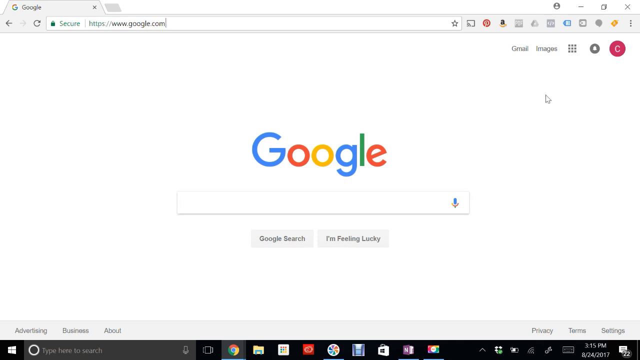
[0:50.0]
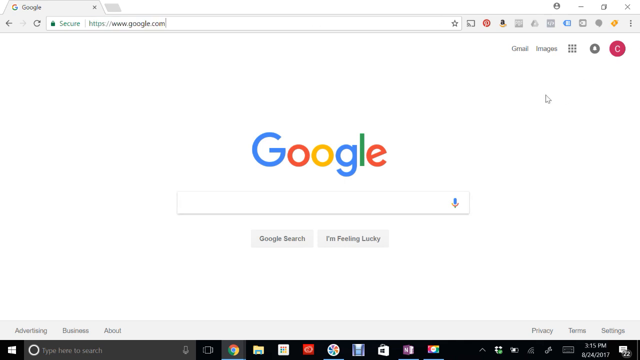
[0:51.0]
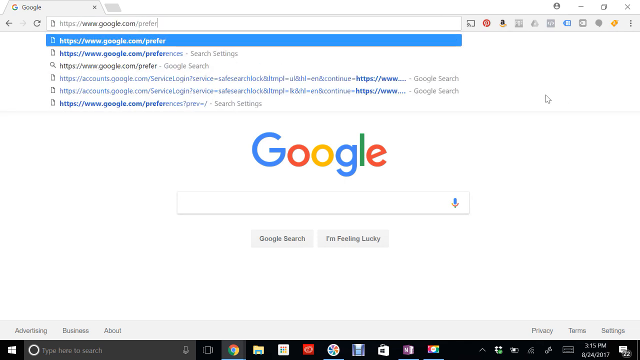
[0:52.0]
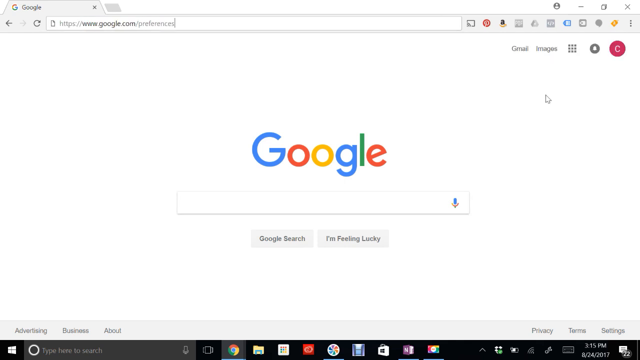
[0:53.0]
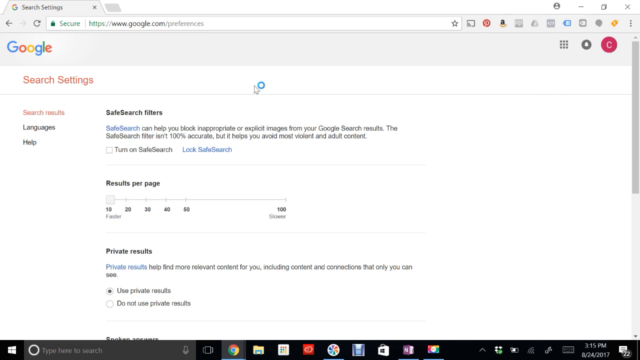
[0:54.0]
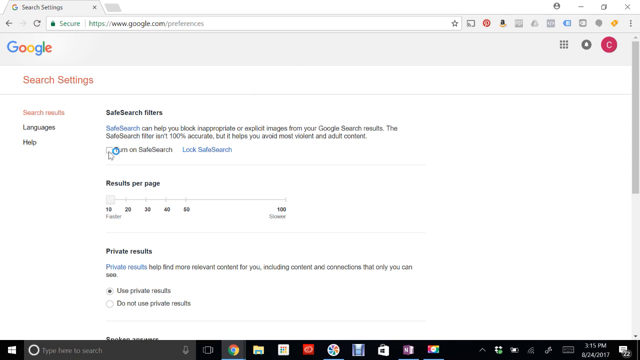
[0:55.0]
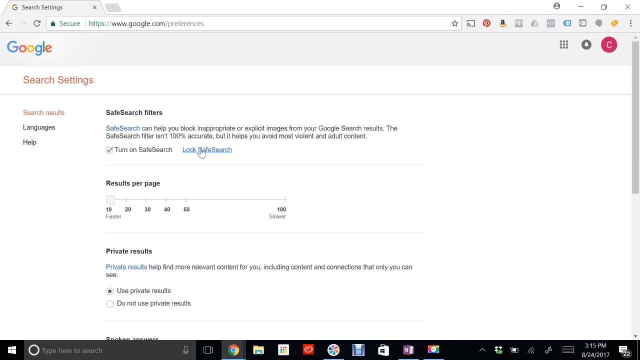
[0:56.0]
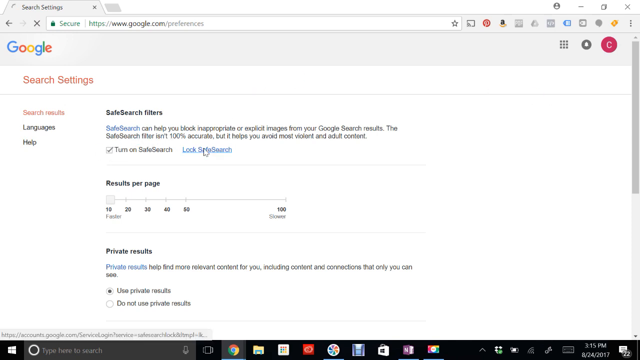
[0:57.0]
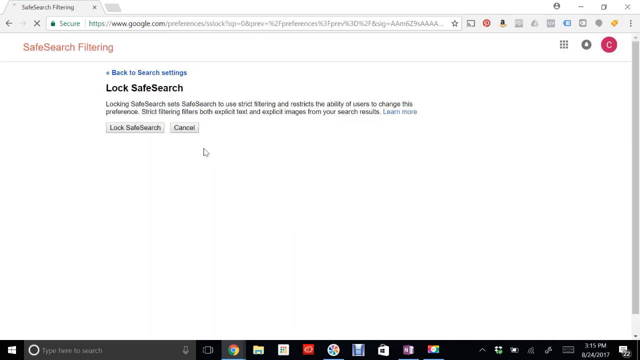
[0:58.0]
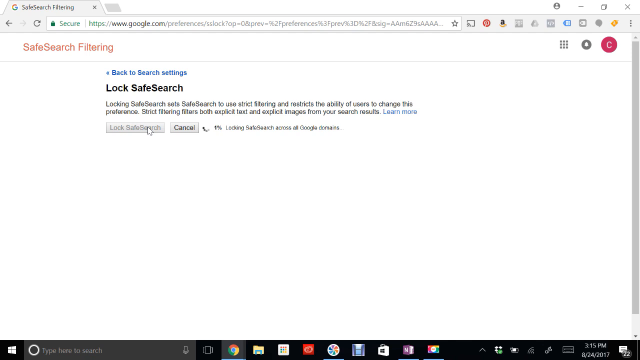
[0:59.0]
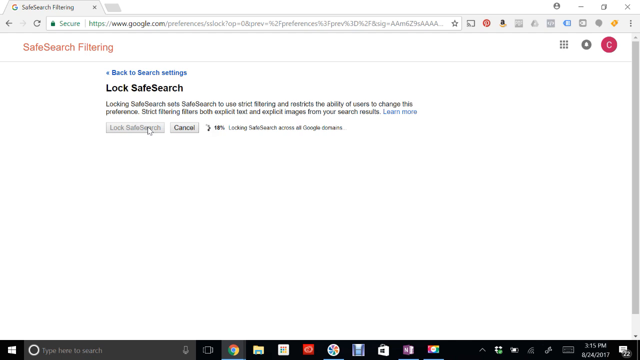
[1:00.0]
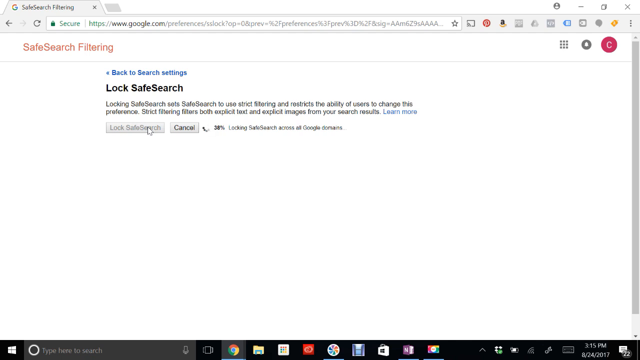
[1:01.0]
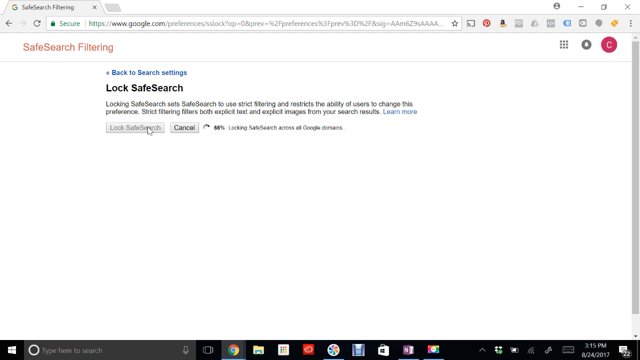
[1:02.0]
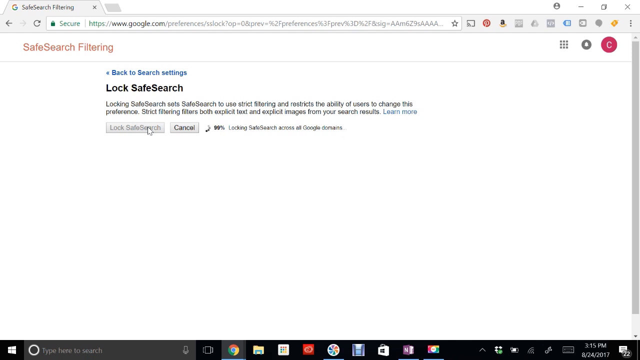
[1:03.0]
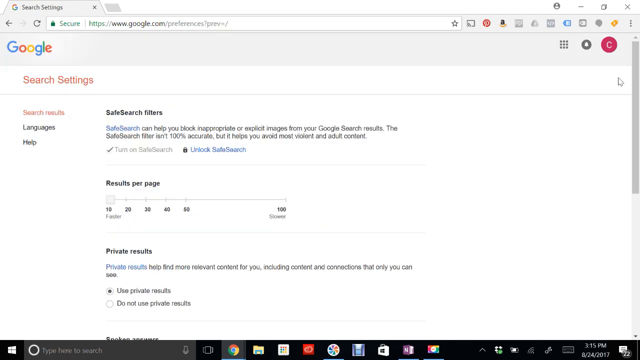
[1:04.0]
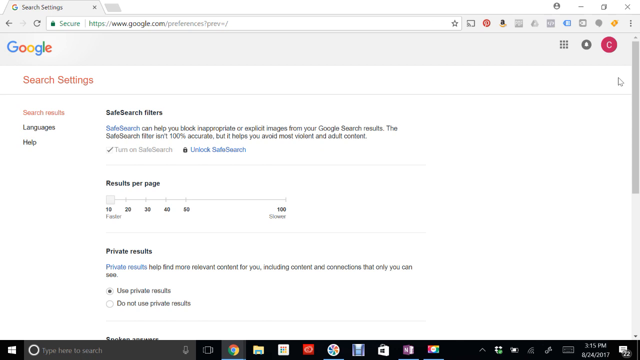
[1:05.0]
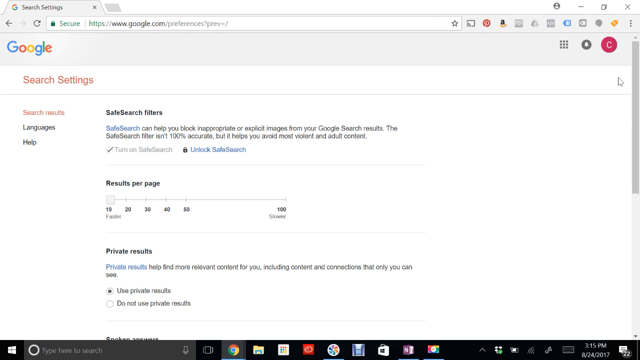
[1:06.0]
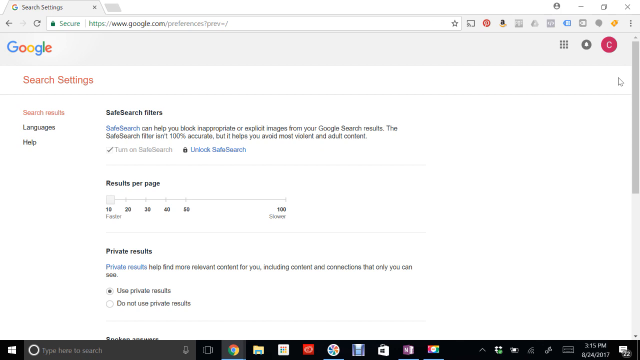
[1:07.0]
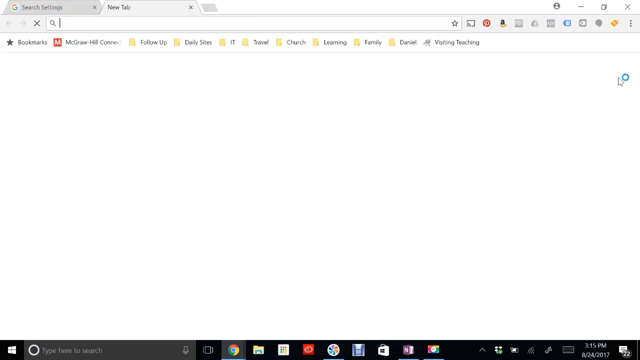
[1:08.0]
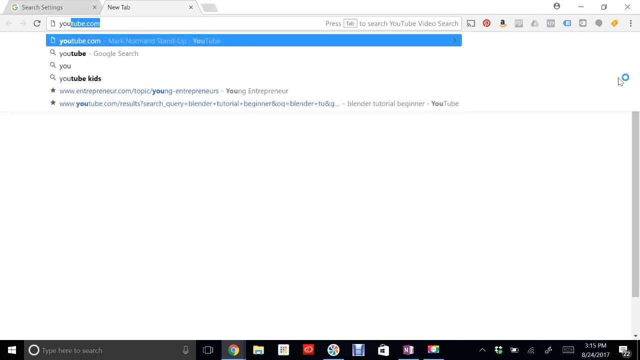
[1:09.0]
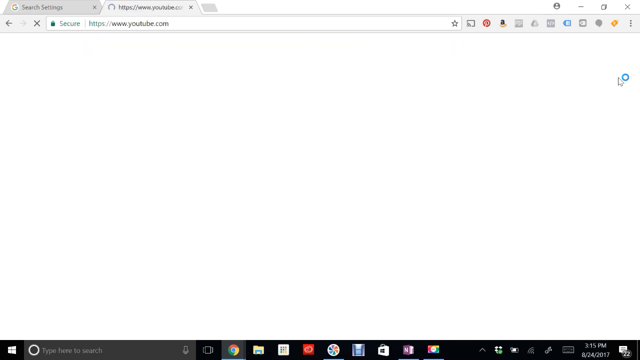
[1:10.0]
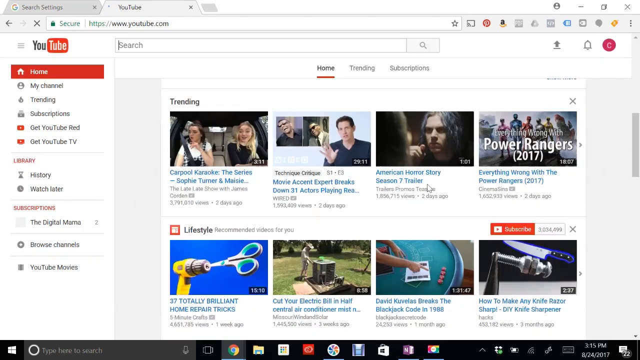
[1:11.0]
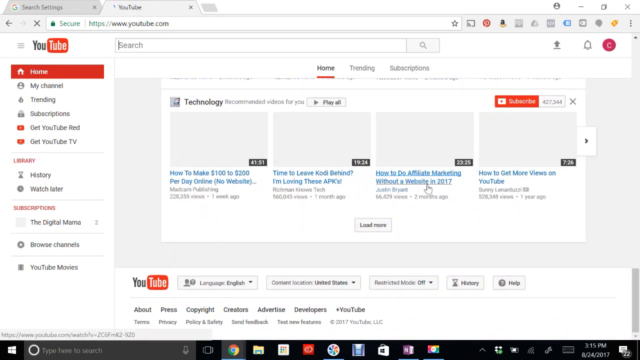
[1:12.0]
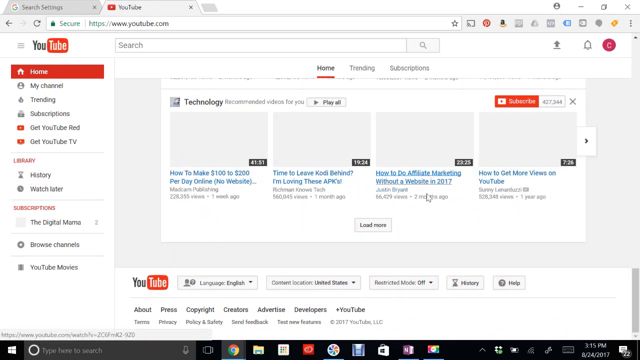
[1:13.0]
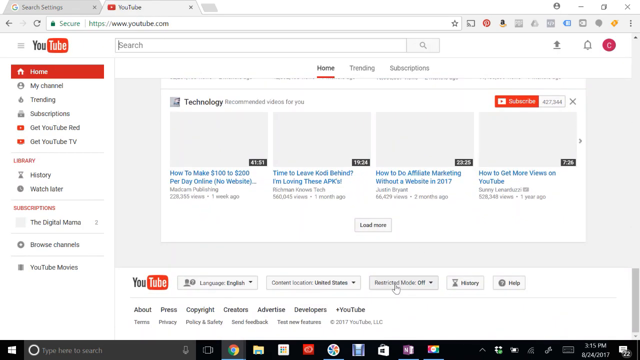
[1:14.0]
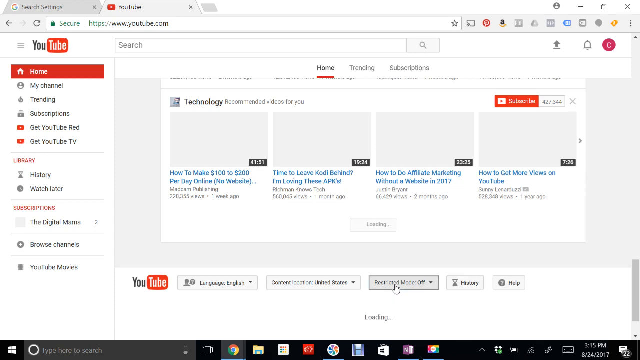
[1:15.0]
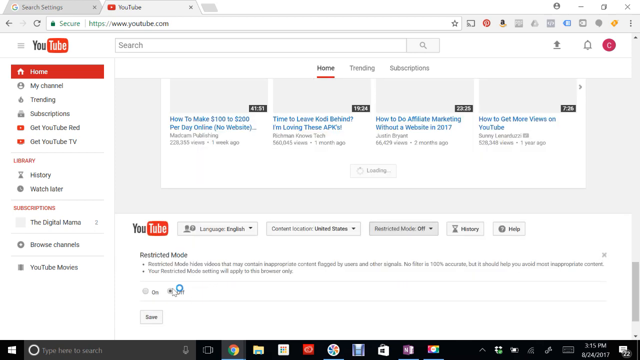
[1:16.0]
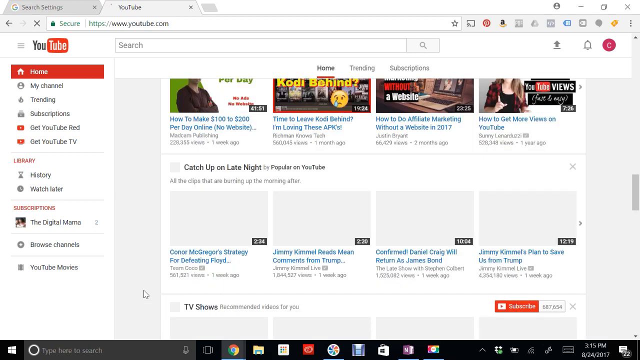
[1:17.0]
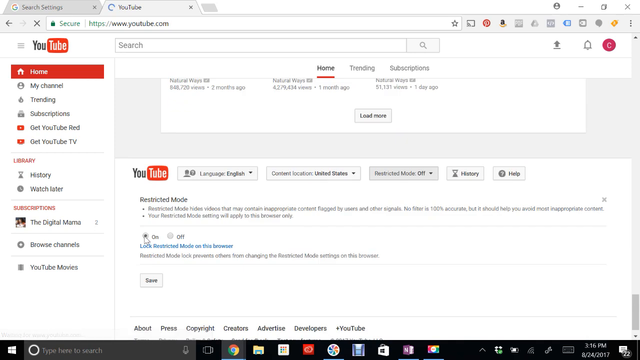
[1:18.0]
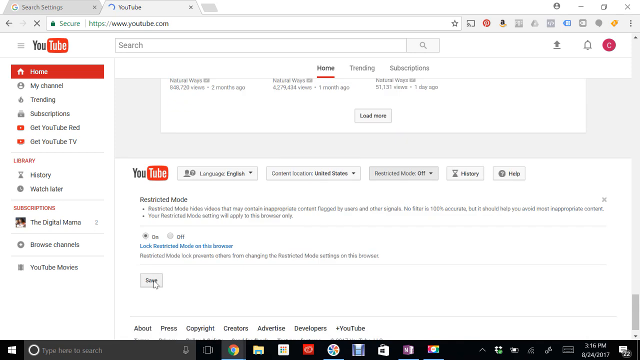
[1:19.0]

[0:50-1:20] On the Google search page, someone adds the word "preferences" to the Google address in the URL bar, then clicks the lock safe search button and the lock safe search activation button. A small progress window with a percentage counter appears, and then a page with search settings and safe search filters comes up. Next comes a blank page, where someone types in the address for YouTube, scrolls down past some YouTube videos, turns a preference bar on and turns on a setting to lock restricted mode. The steps move quite briskly. The browser is unclear, possibly Chrome or Edge.